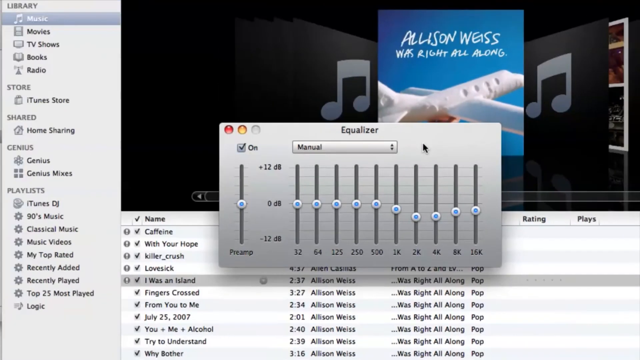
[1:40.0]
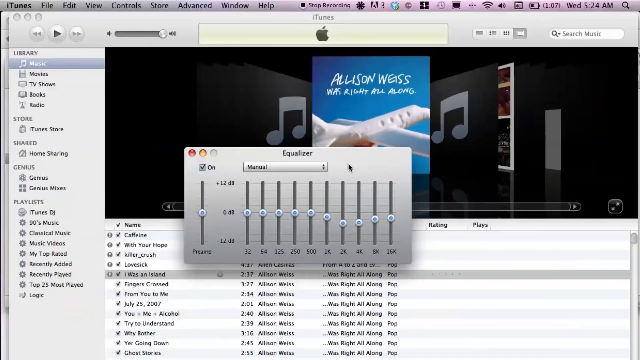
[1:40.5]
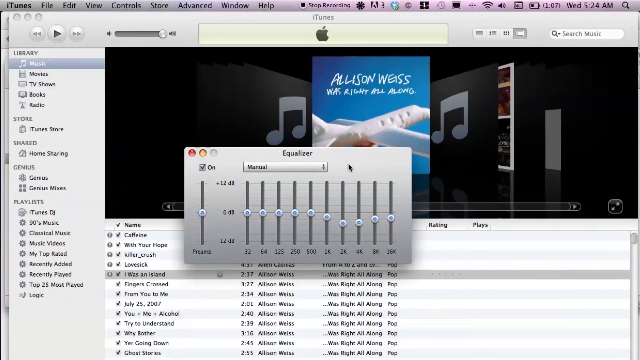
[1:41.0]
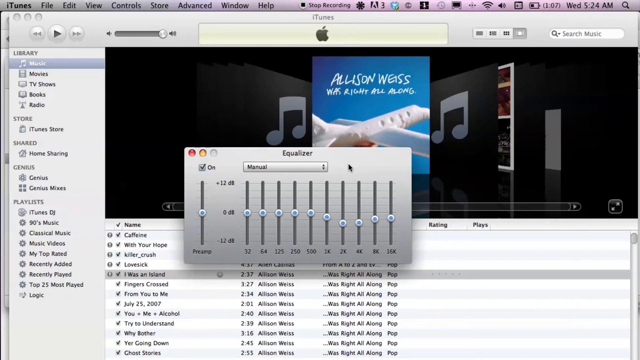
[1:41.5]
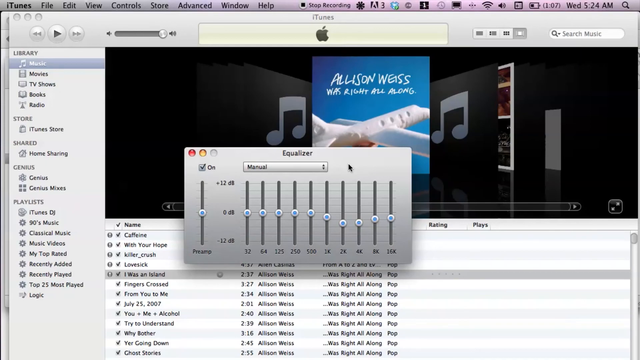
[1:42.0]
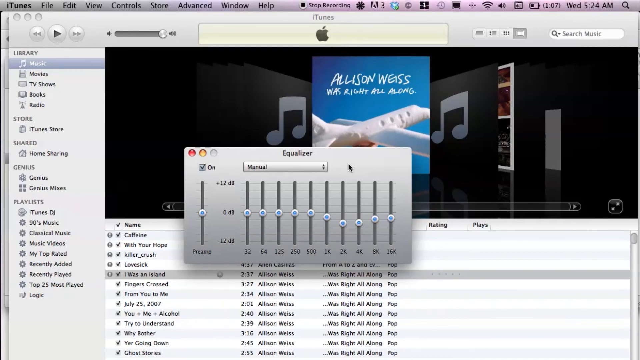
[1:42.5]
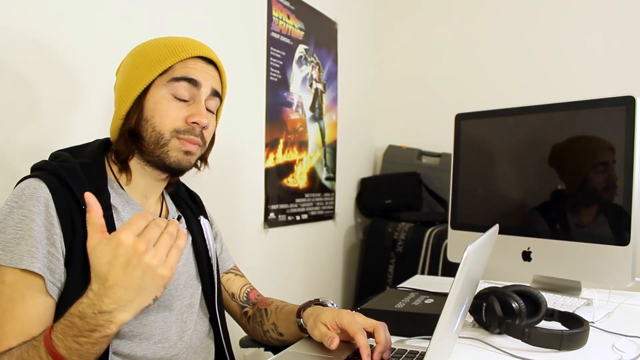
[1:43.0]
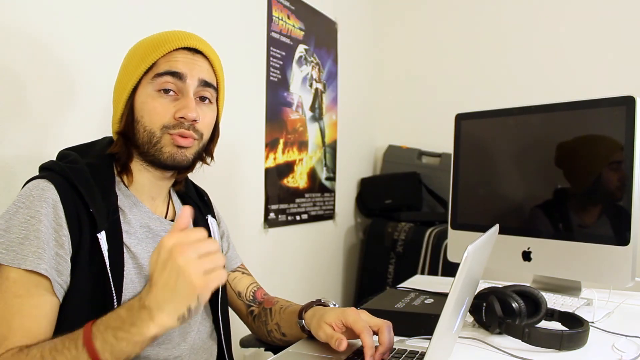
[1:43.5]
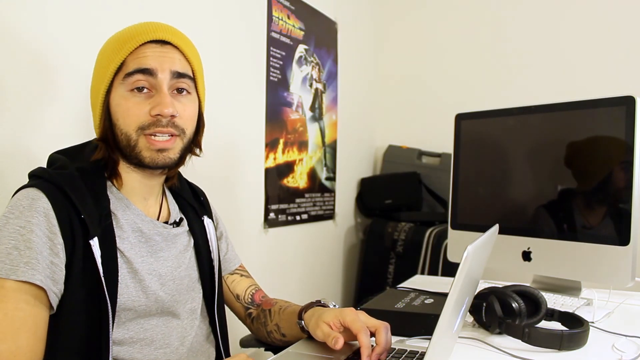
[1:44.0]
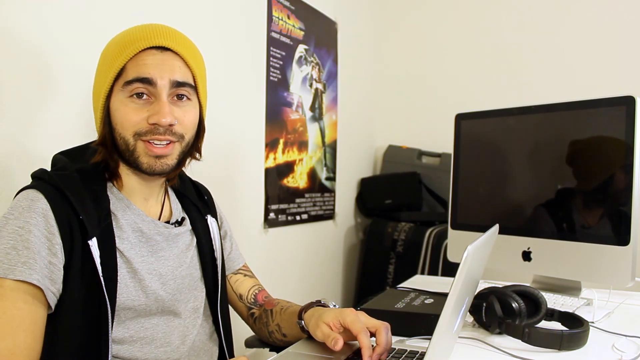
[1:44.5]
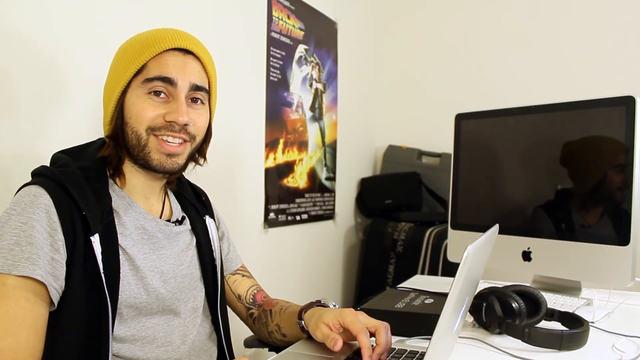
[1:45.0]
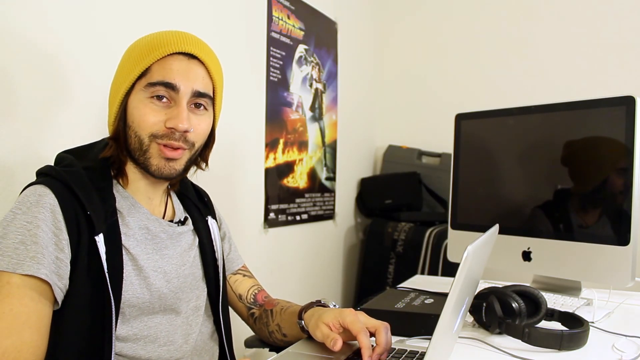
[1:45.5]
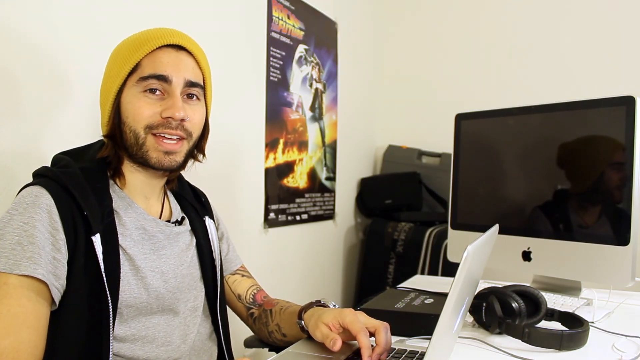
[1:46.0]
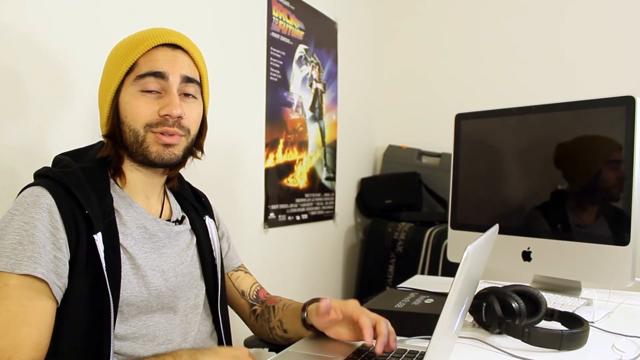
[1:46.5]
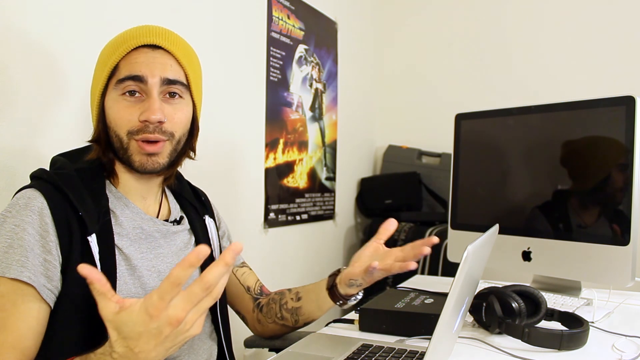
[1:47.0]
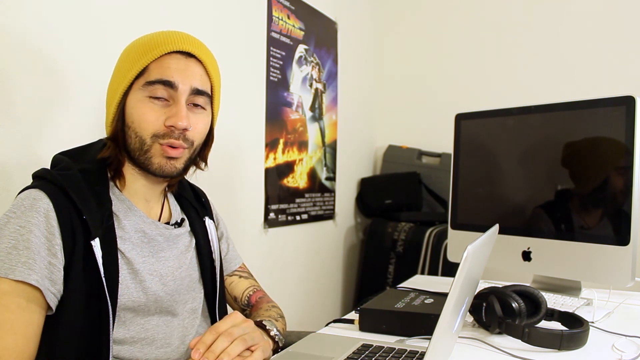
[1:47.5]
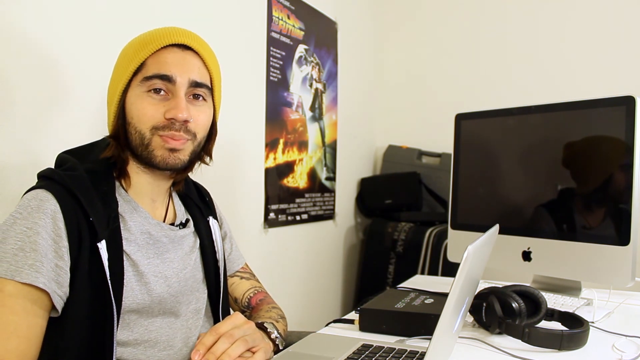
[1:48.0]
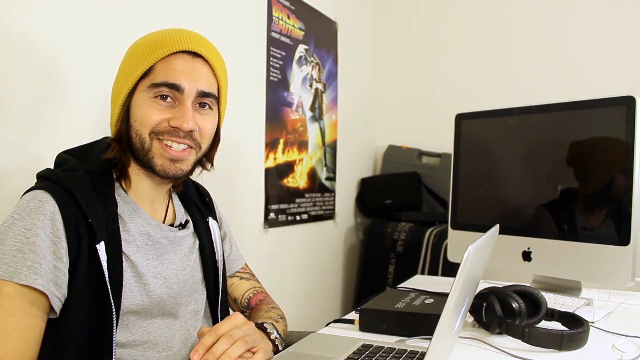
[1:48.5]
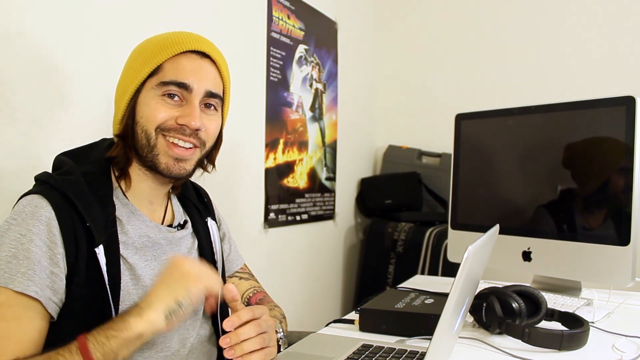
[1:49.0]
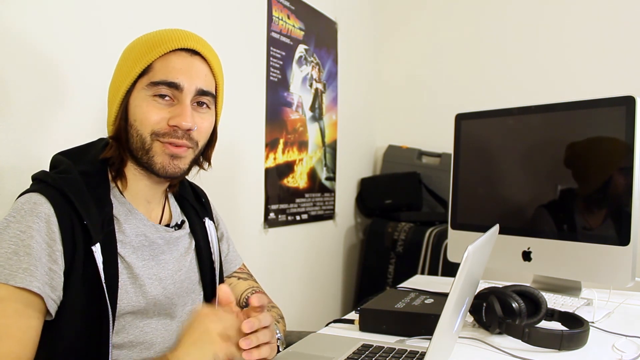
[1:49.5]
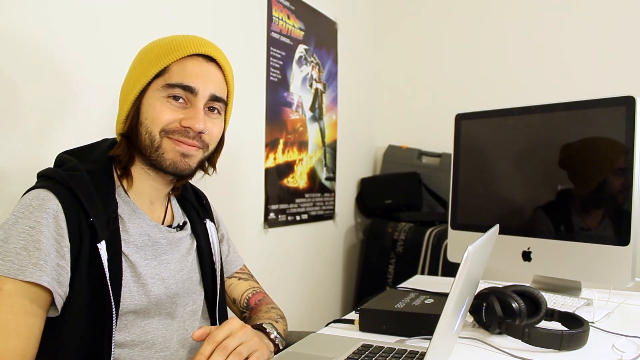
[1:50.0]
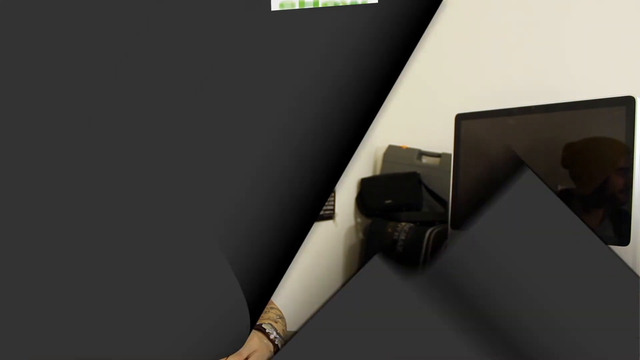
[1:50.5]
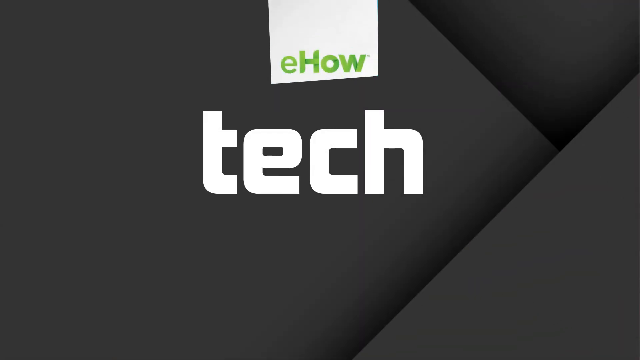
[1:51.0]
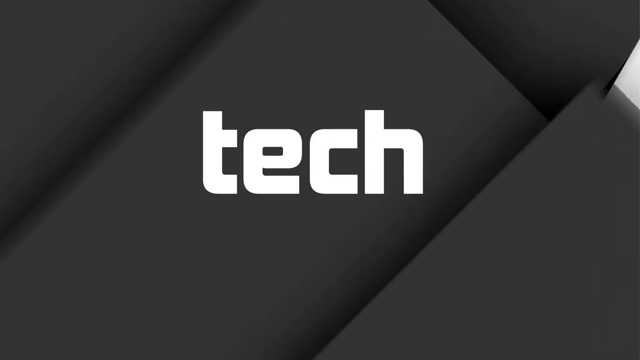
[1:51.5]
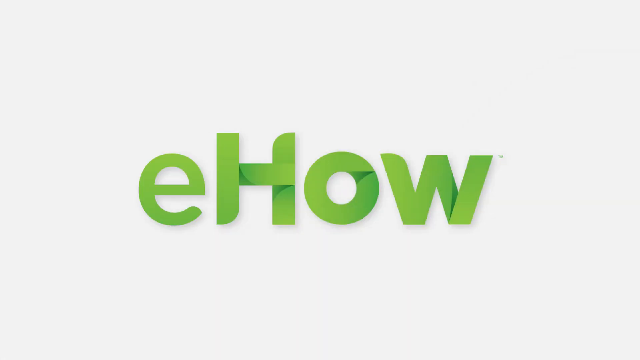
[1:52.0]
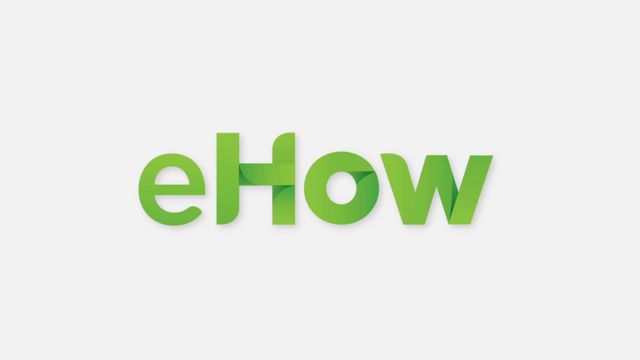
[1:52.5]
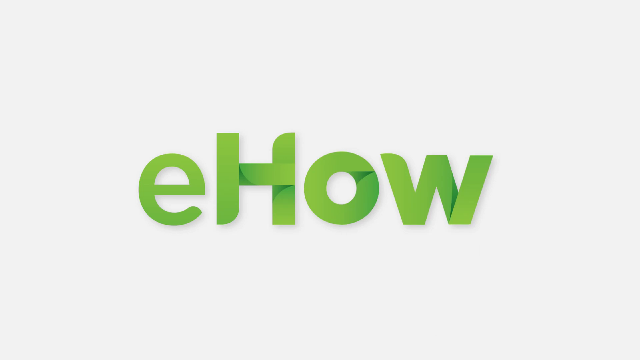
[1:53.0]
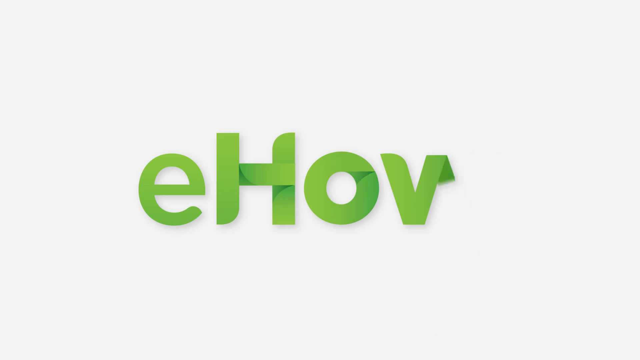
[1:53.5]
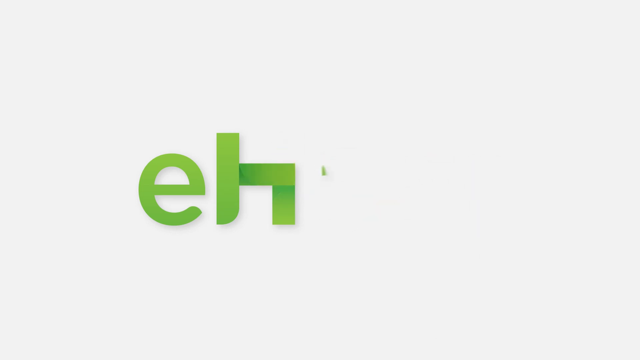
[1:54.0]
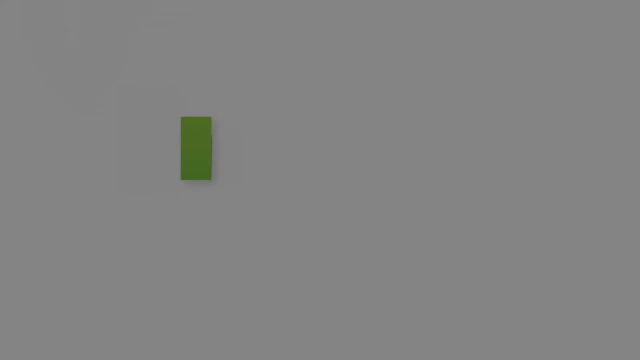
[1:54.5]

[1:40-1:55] The equalizer menu is shown in the middle of the screen, but the view zooms out relatively quickly to the full-page iTunes player screen. The shot then changes back to the man, who looks and talks directly into the camera, smiling. He seems to be giving his final summary remarks, still gesturing with his hands, and then appears to sign off, gesturing with his index finger towards the camera and smiling. The video then changes back to the white title card, with the green and white eHow logo flashing back up onto the screen. The logo then dissolves in the opposite way it scrolled in, disappearing off the left side of the screen.